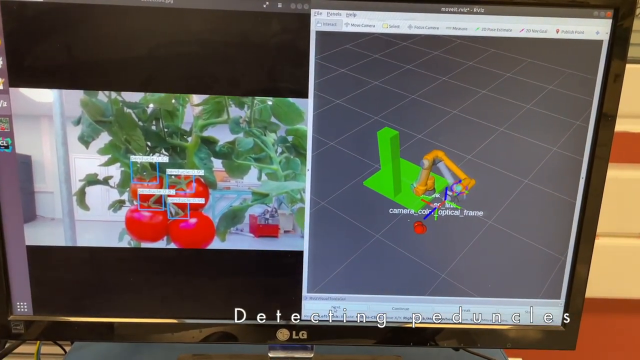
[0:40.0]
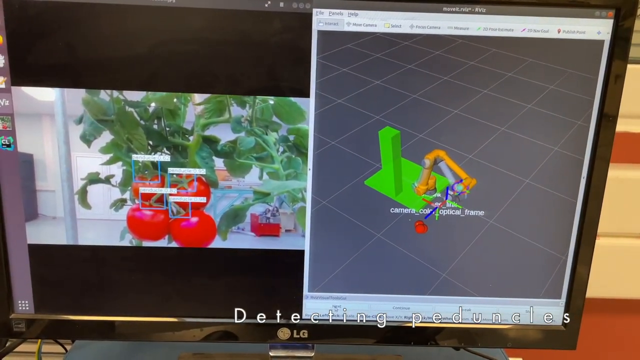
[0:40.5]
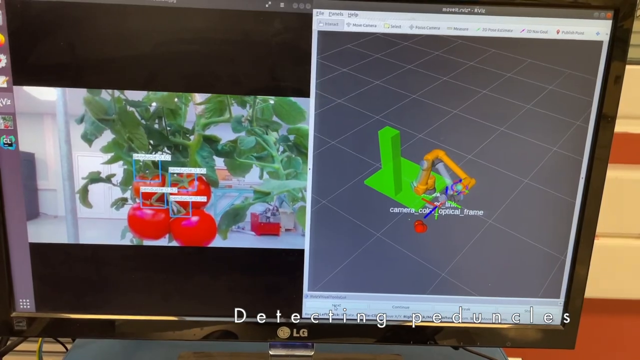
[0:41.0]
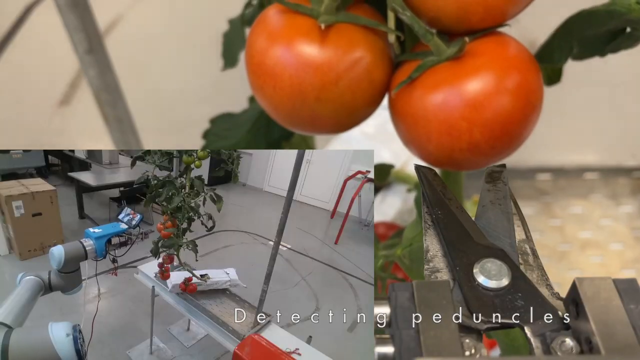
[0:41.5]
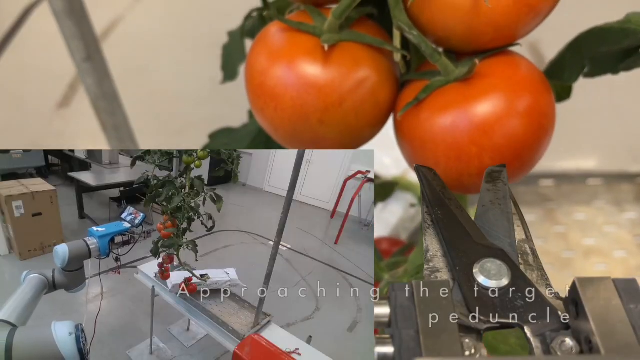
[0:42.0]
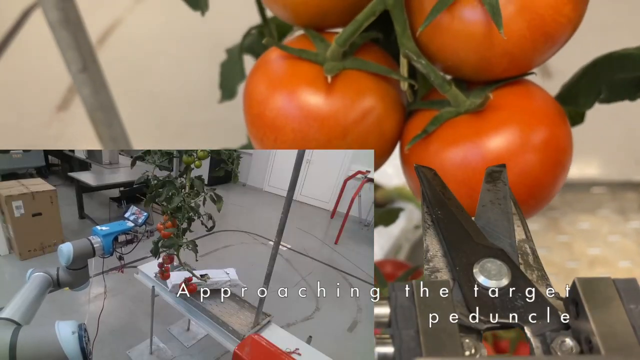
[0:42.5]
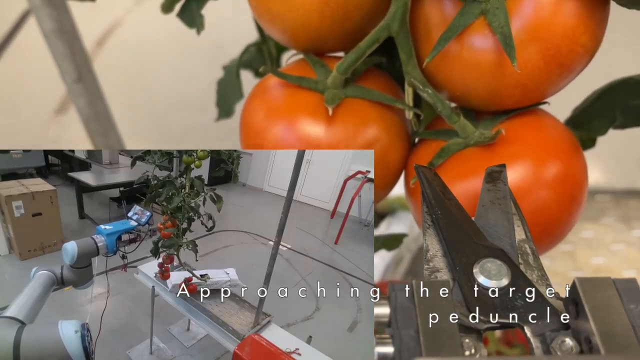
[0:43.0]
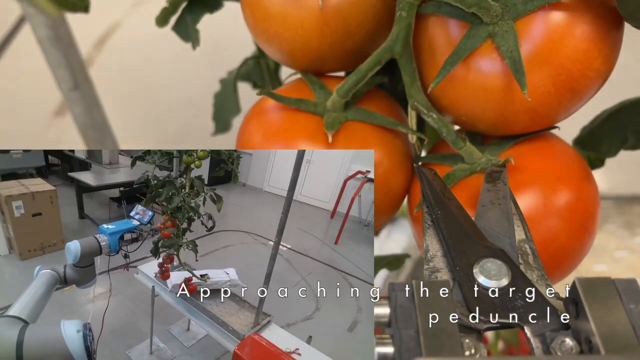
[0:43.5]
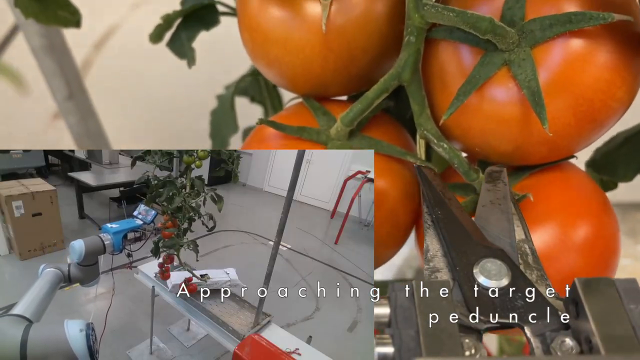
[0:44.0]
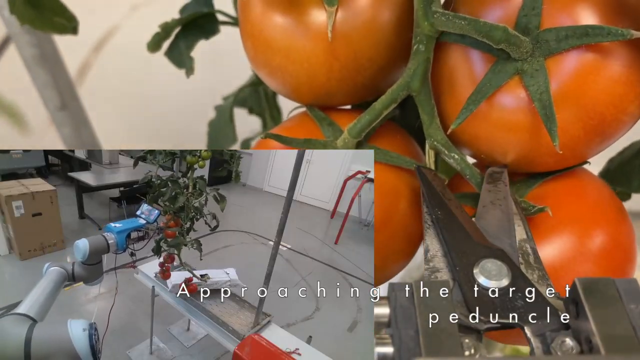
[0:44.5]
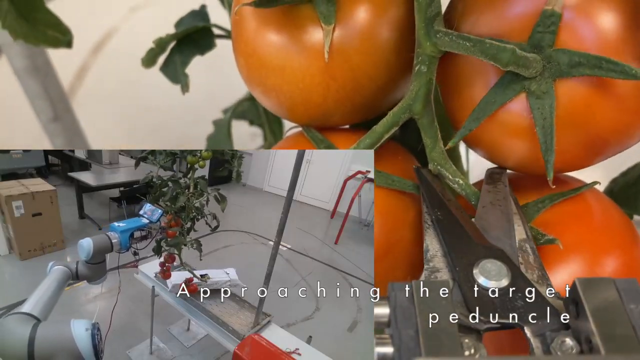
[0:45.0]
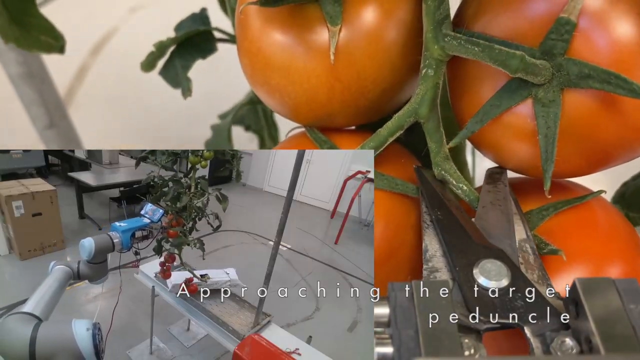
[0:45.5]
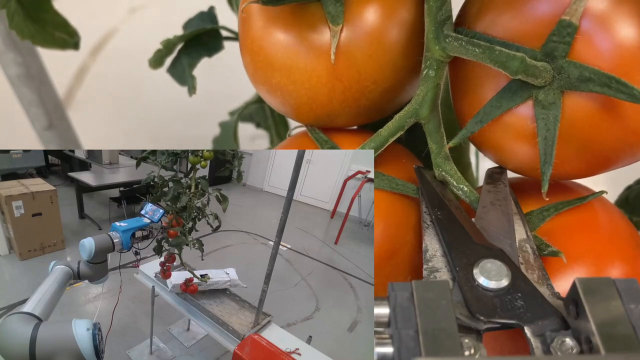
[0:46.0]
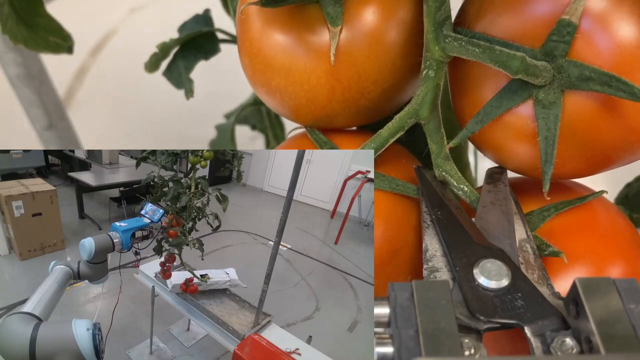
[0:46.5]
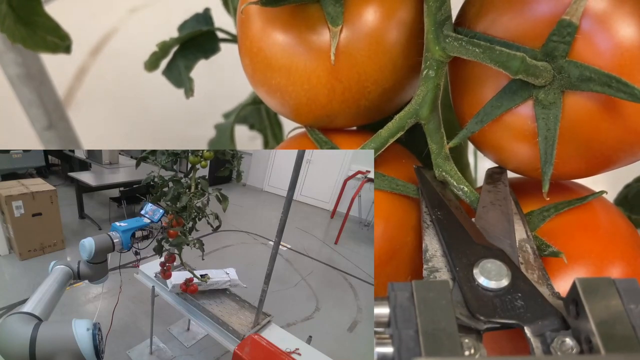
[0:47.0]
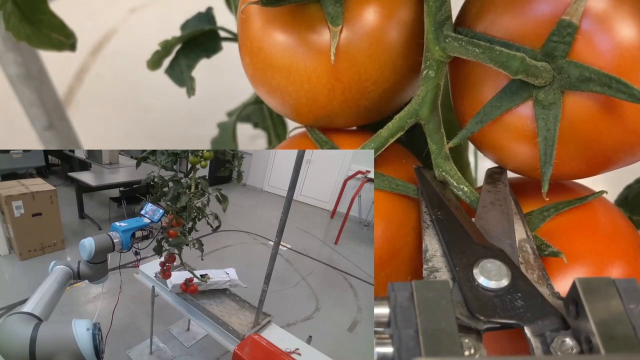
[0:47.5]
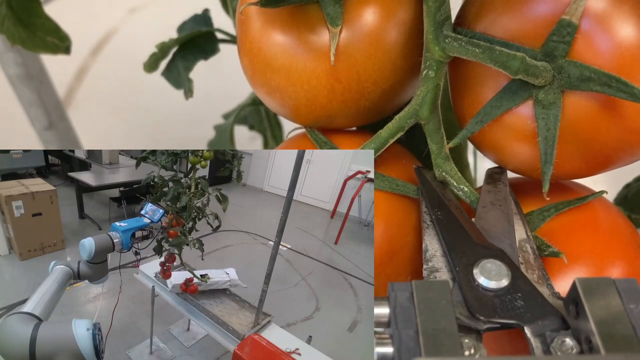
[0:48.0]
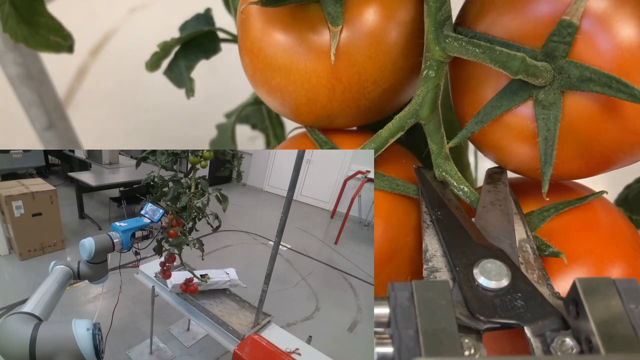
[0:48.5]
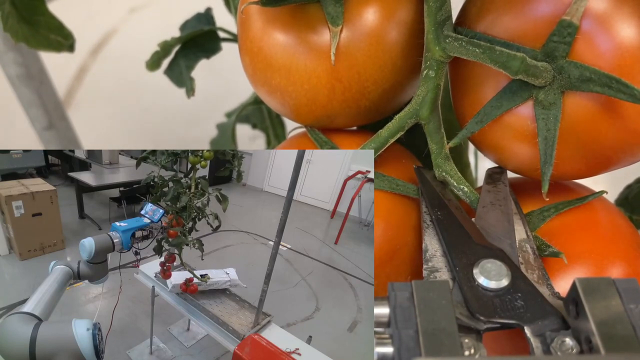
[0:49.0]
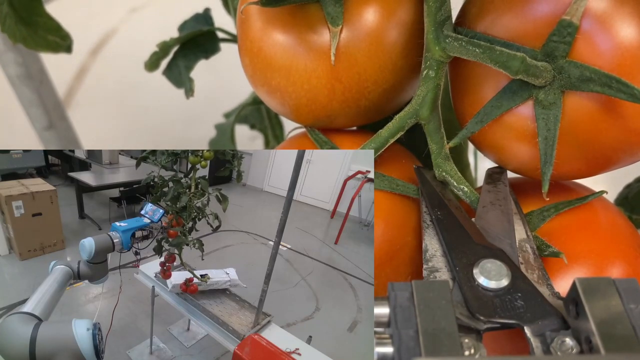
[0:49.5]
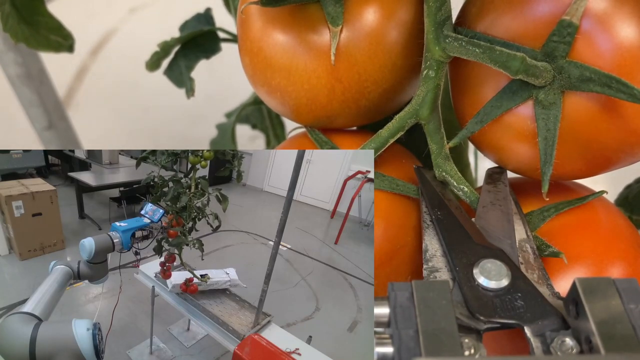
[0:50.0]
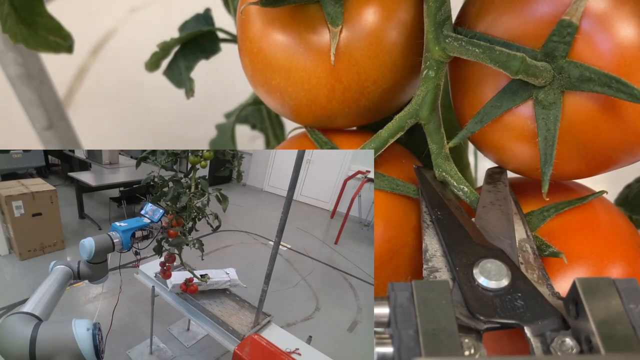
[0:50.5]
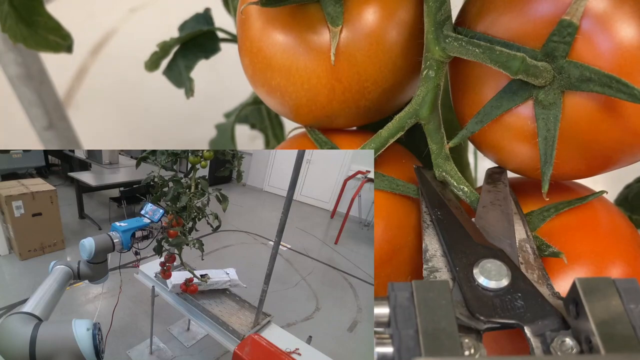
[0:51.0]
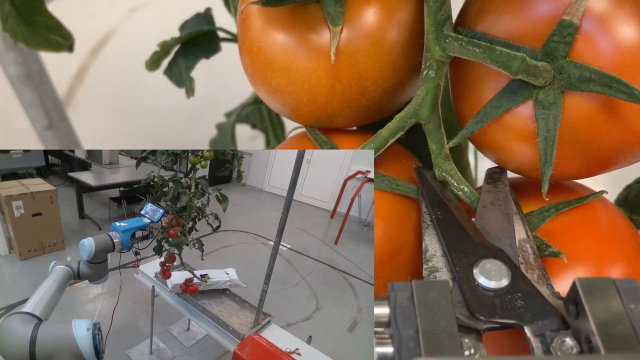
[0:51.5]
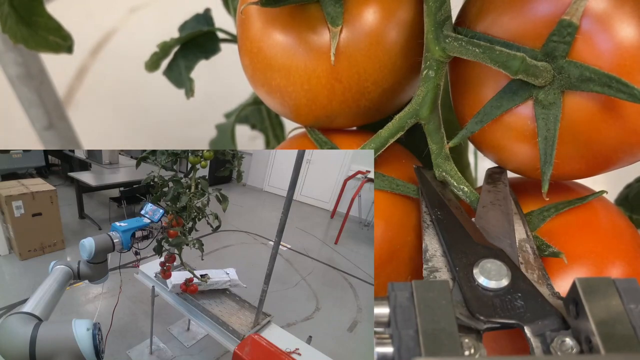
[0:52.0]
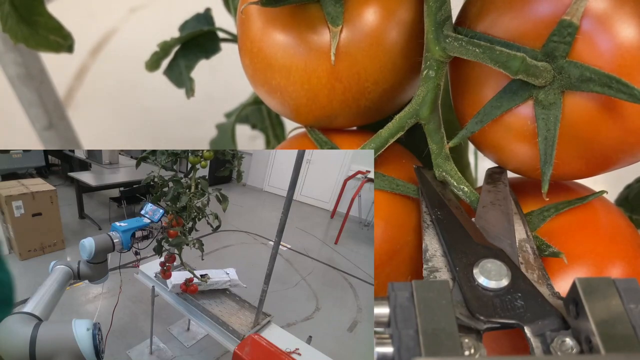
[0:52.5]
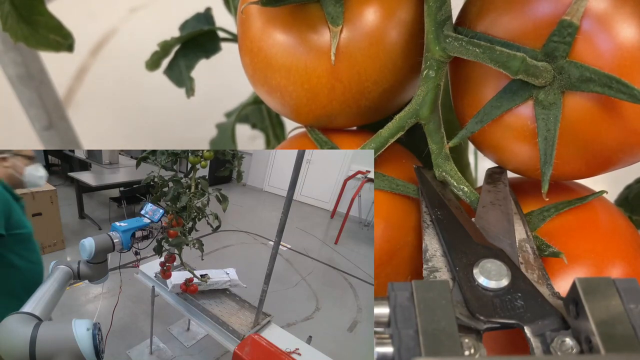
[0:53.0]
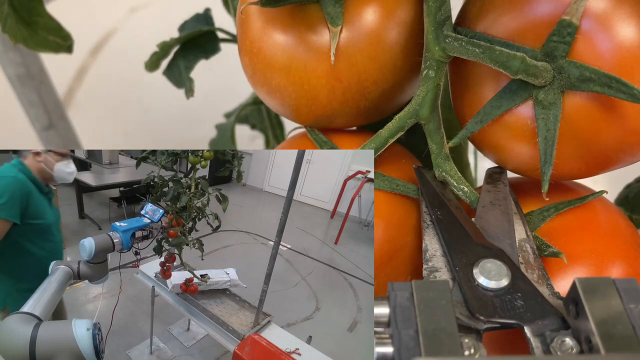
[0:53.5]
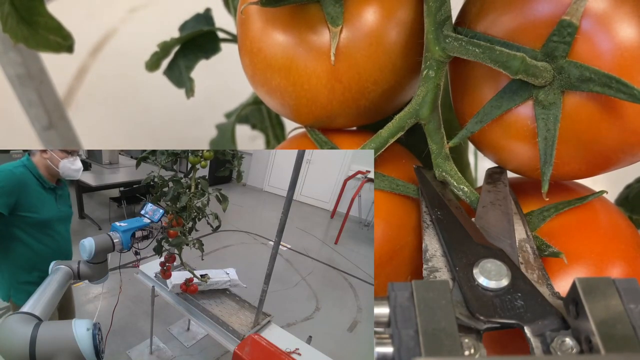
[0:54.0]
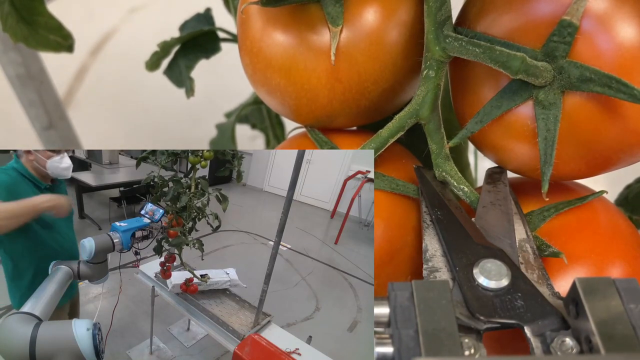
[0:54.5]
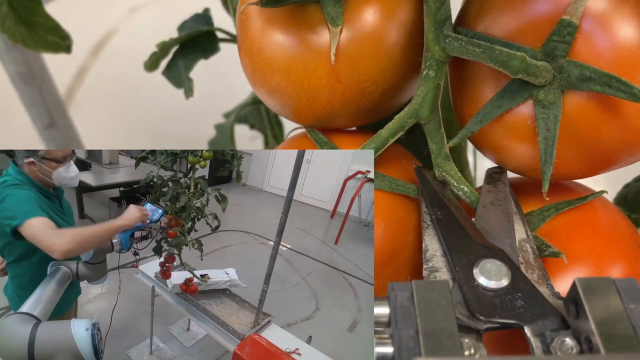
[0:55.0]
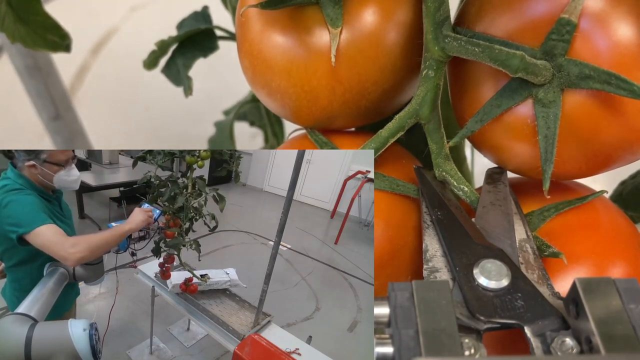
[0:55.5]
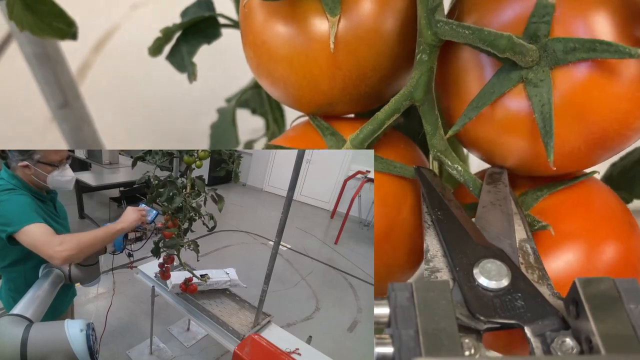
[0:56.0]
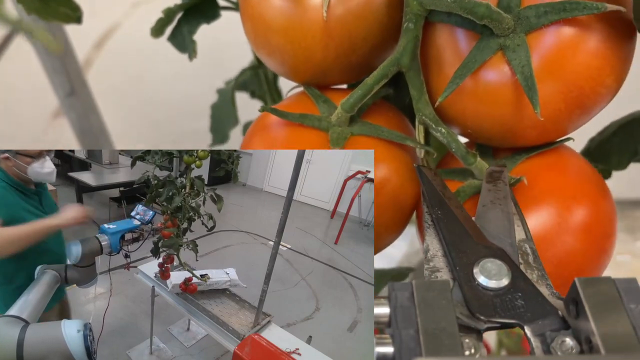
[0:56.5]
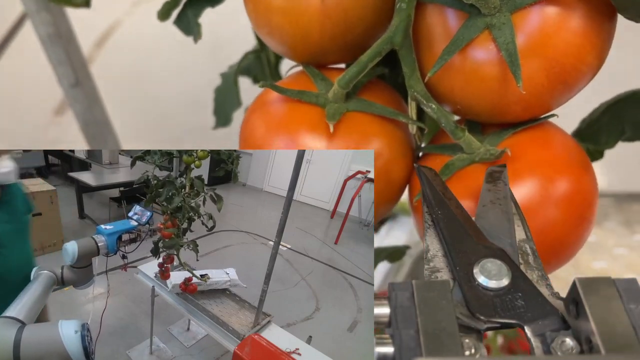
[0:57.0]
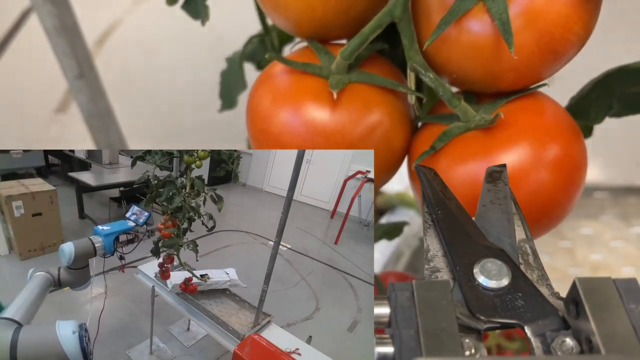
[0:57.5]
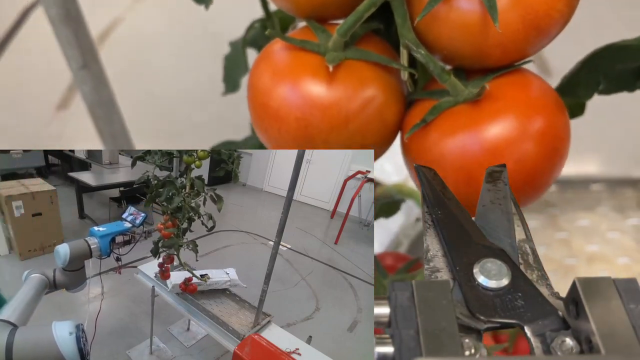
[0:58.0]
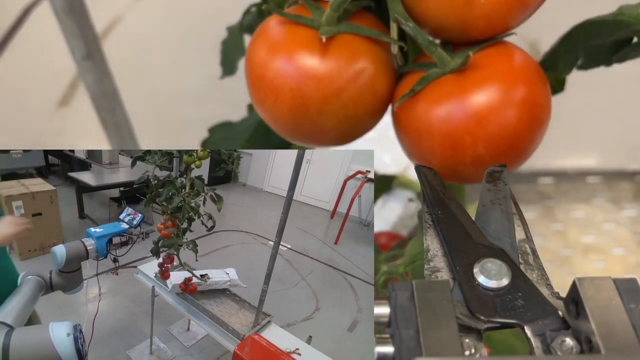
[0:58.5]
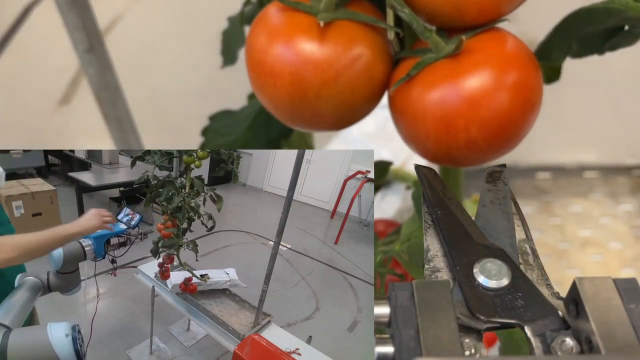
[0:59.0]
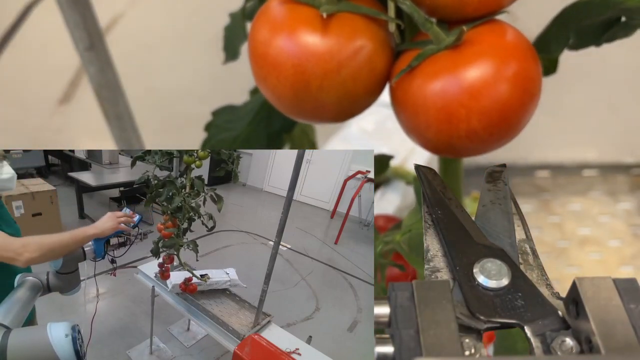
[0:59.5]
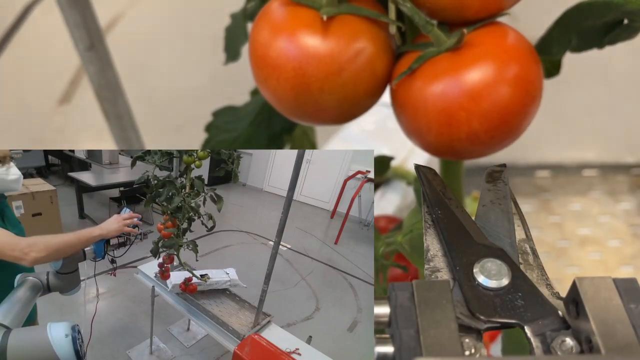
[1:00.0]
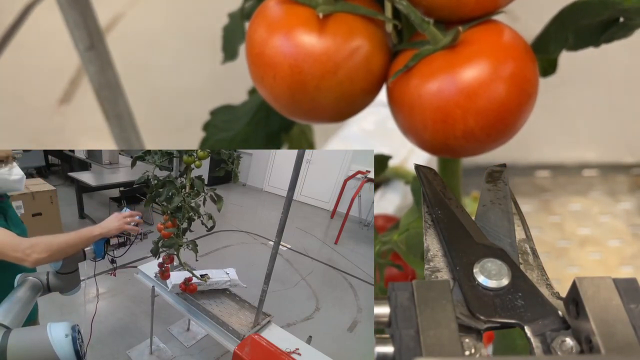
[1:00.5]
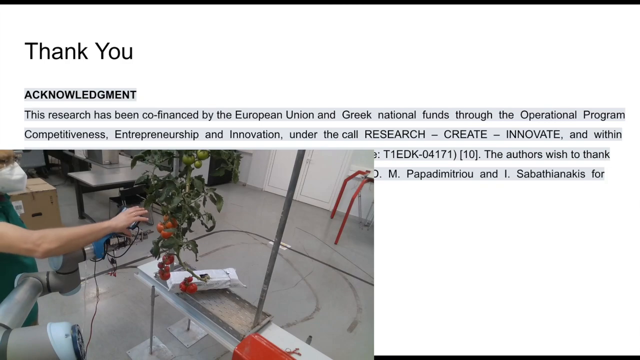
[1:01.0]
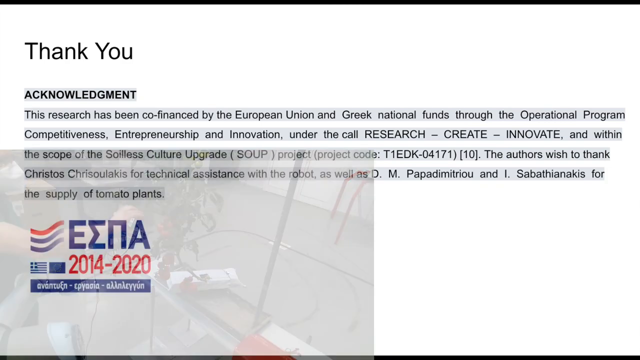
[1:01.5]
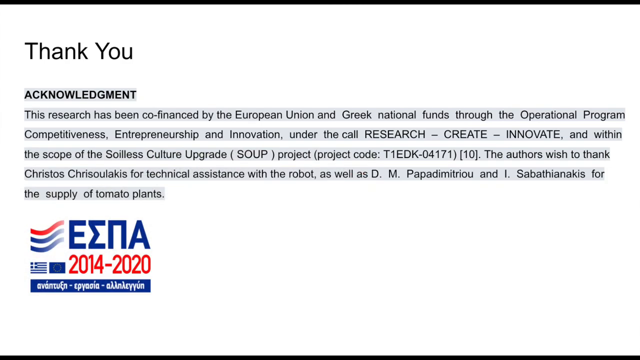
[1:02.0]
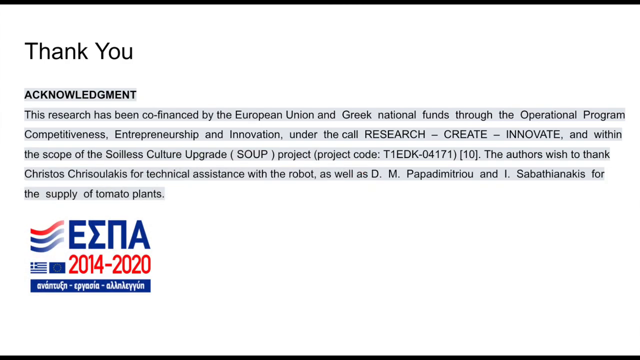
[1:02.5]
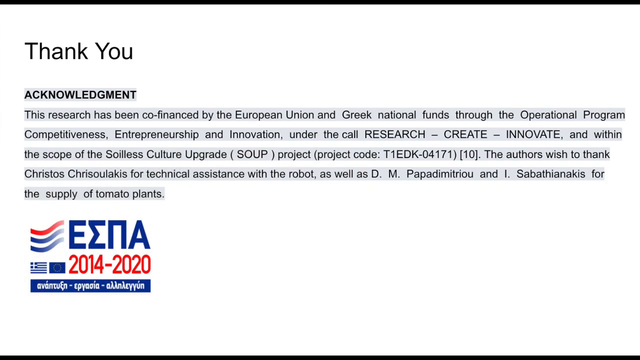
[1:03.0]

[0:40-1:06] Two views are shown at once. In the background is a first-person view from the scissor arm of a robotic piece of equipment, facing a tomato plant. In the bottom left-hand corner, another view shows a wider shot of the robotic equipment going towards the tomato plant. Text at the bottom reads "approaching the target peduncle." The scissor arm has moved towards the stem that attaches the tomato fruit to the plant and is slightly in the process of snipping it when an engineer comes from the corner of the screen view and approaches the equipment. The engineer presses a button on a smartphone that has been placed on the robotic arm, and the equipment begins to reverse away from the tomato plant. The screen then changes to a still screen with a white background and black text showing a thank you and acknowledgement regarding research carried out by the Greek university.